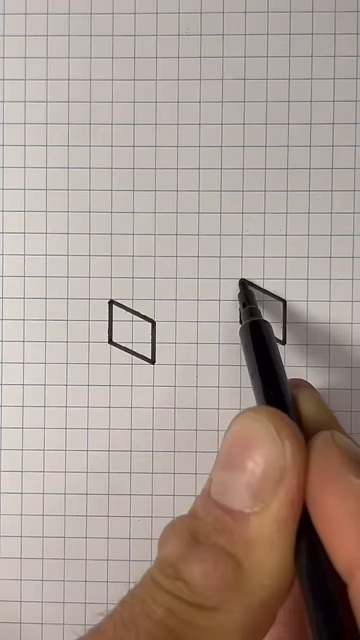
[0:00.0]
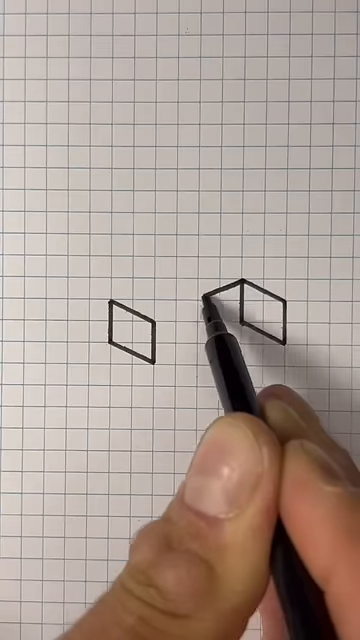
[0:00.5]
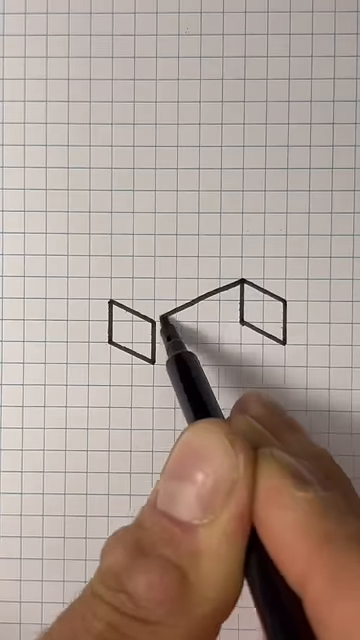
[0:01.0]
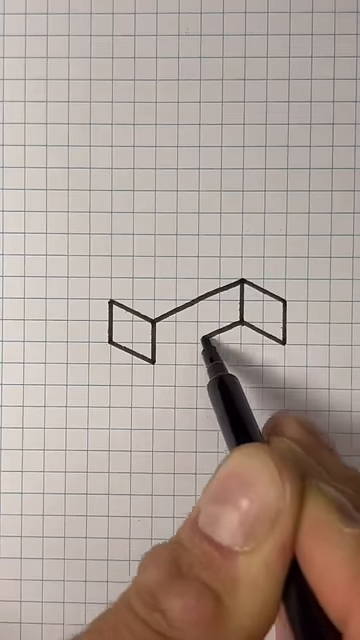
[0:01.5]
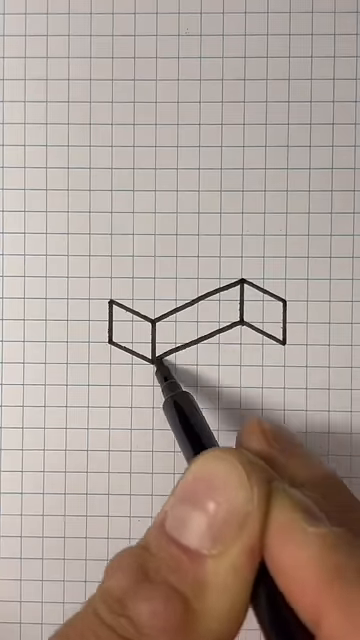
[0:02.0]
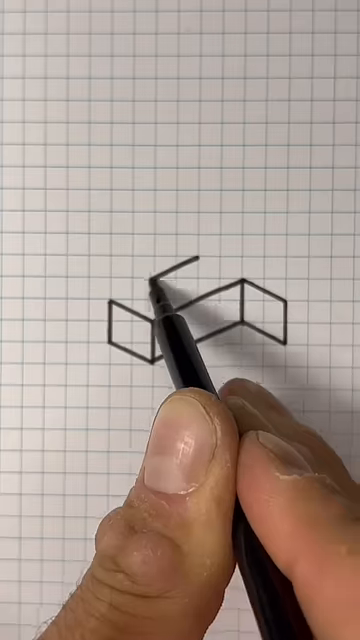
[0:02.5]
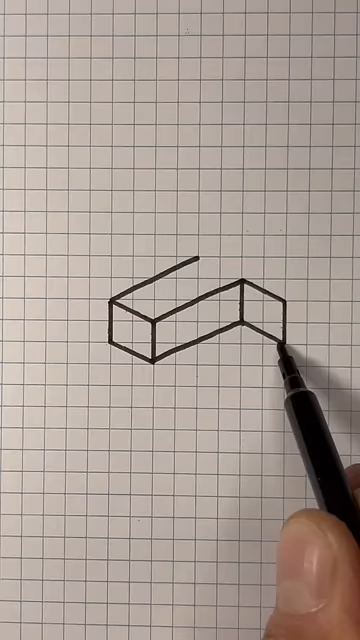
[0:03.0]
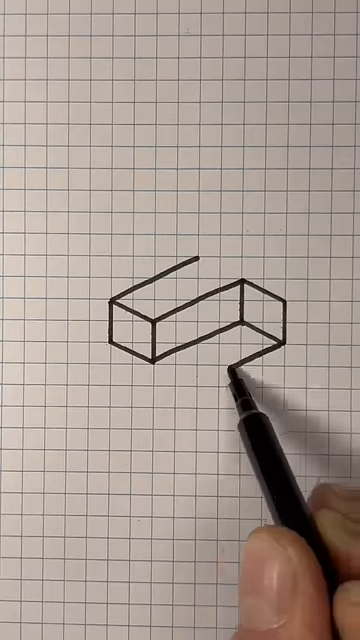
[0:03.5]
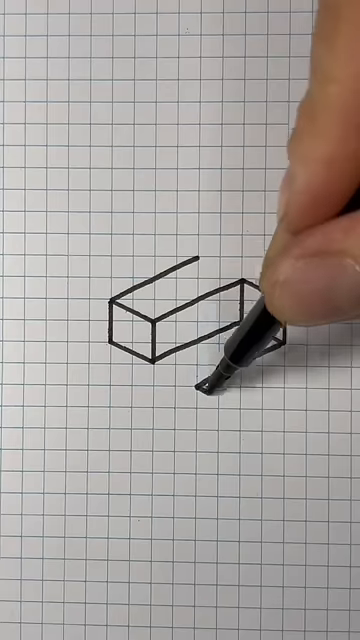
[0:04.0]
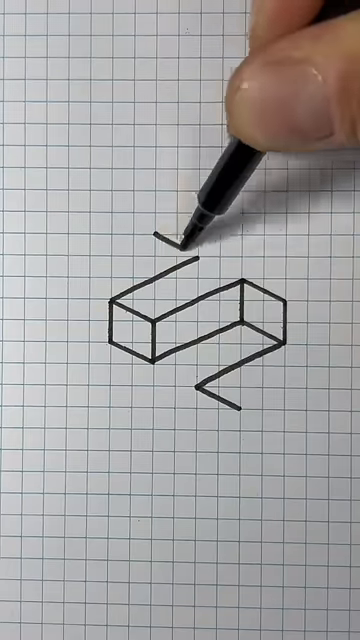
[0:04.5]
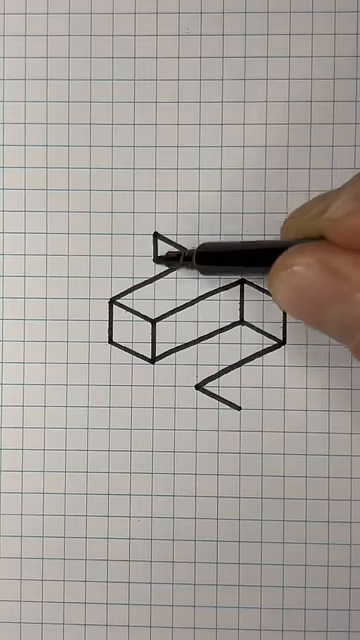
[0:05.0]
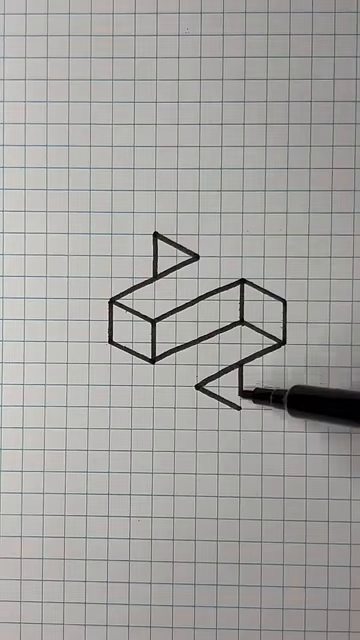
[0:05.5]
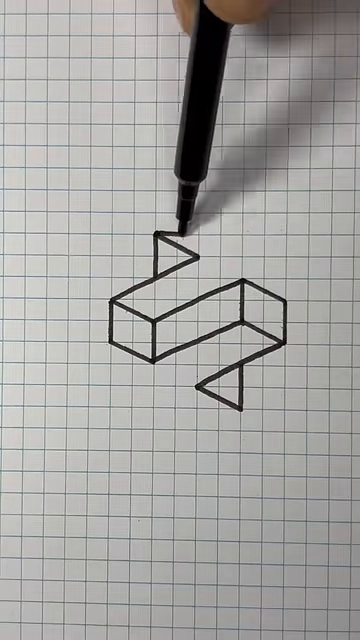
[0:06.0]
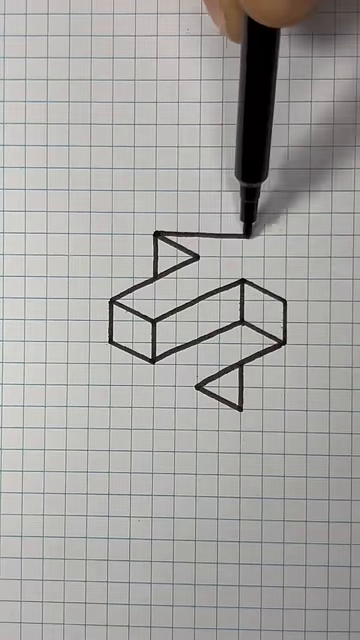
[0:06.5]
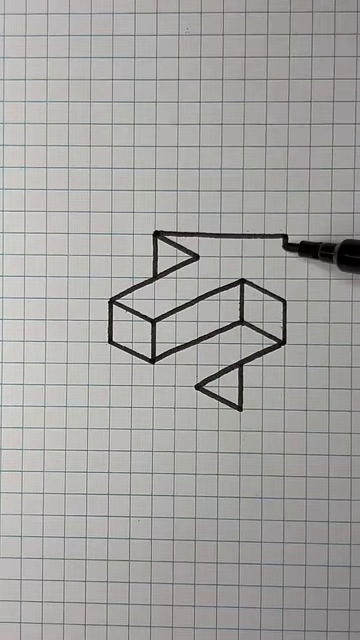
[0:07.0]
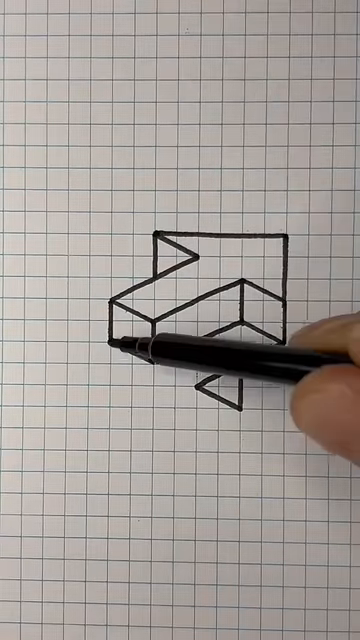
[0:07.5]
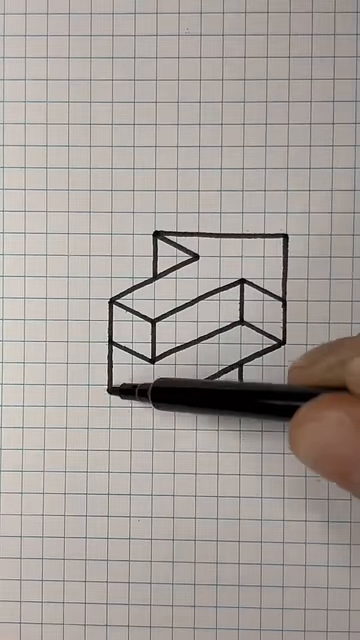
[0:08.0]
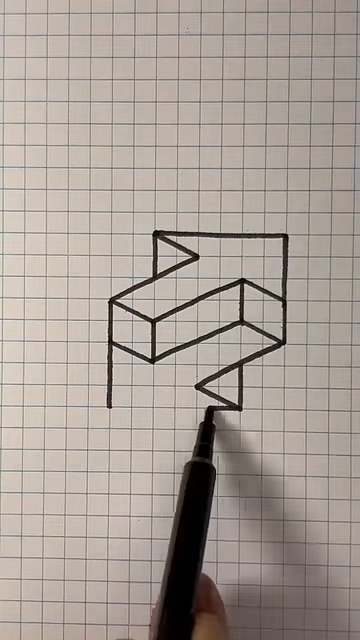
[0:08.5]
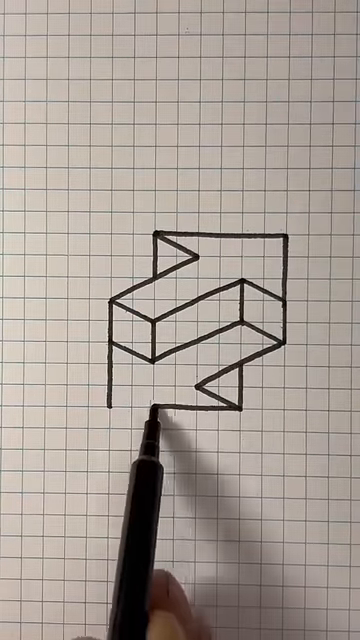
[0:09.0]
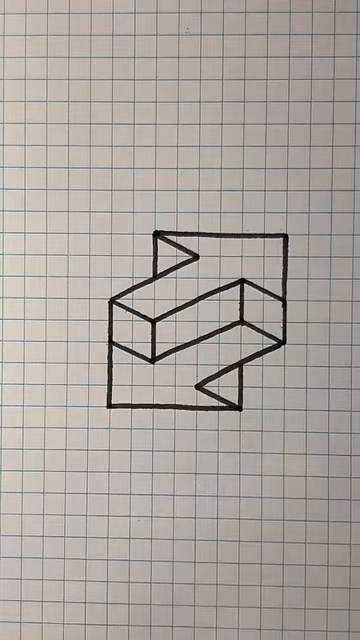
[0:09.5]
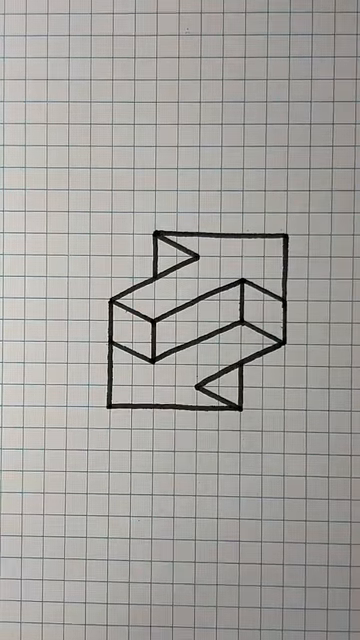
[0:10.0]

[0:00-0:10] A close-up shows someone drawing a three-dimensional design on white graph paper, with a close-up of the person's hand holding a black felt pen in the front. Line by line, the drawing forms two three-dimensional arrows pointing in opposite directions that look as though they overlap each other. The arrows are in the center of the white graph paper. There are two black bars on either side of the central video image, and in the lower right-hand corner of a black bar there is a white square with a three-dimensional star image in its center. There is no other text, diagram or explanatory information, just a demonstration of how to draw the overlapping 3D arrows. The visible hand has short, cut nails and looks very much like a man's hand rather than a woman's. The graph paper has very distinct square lines, some of them a little darker than others.